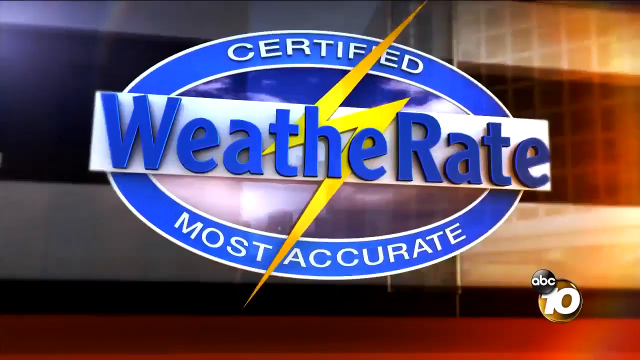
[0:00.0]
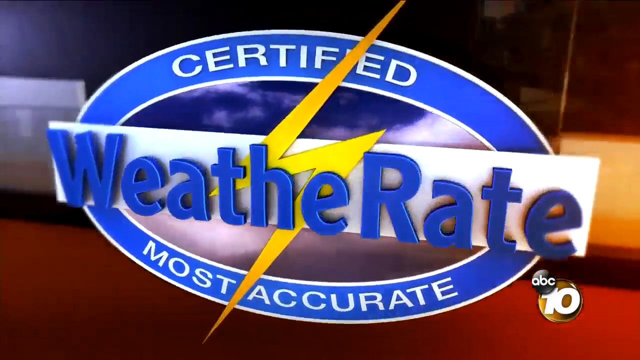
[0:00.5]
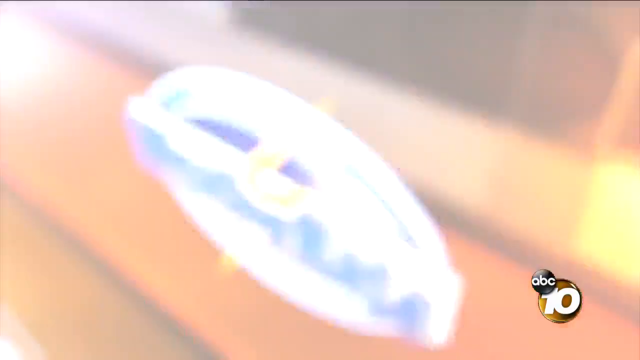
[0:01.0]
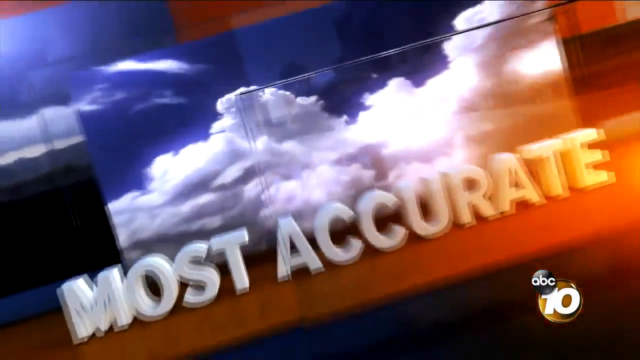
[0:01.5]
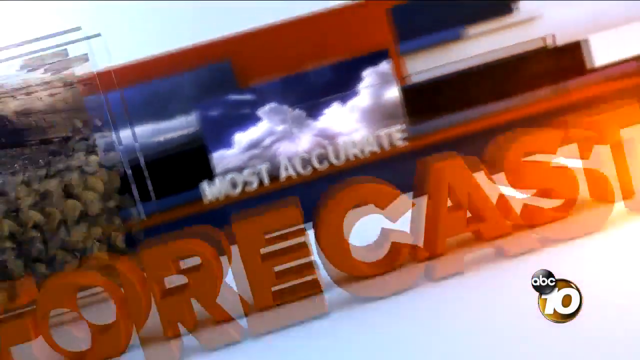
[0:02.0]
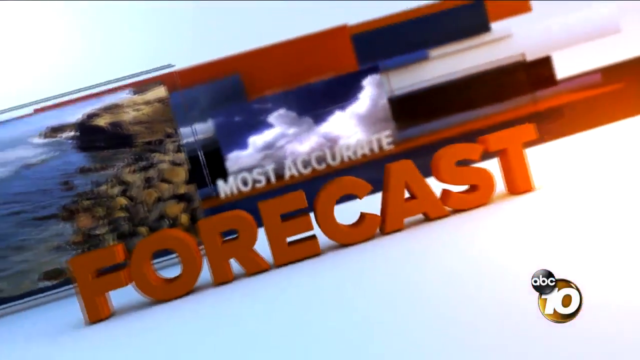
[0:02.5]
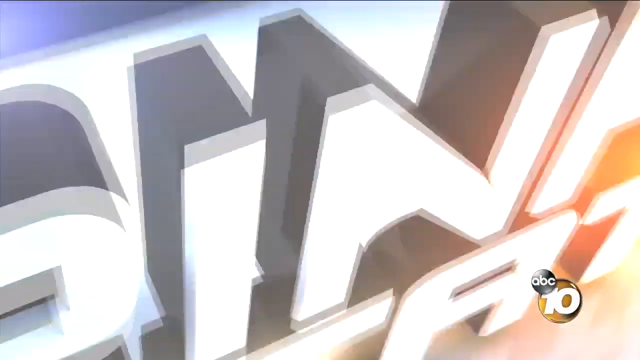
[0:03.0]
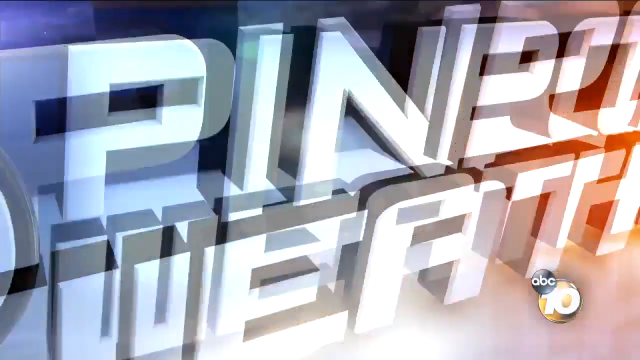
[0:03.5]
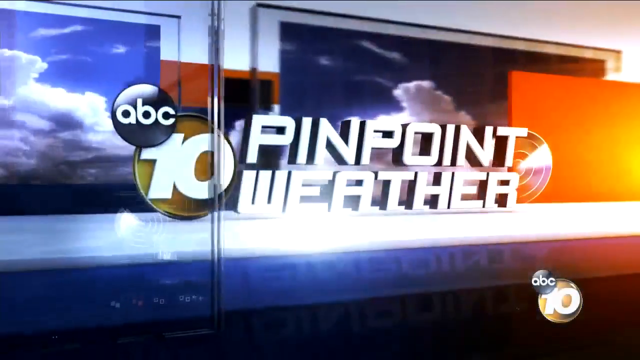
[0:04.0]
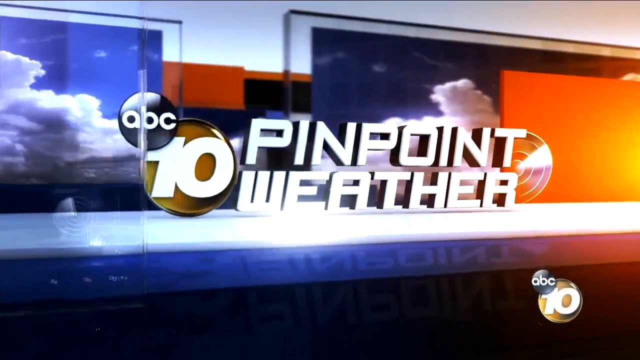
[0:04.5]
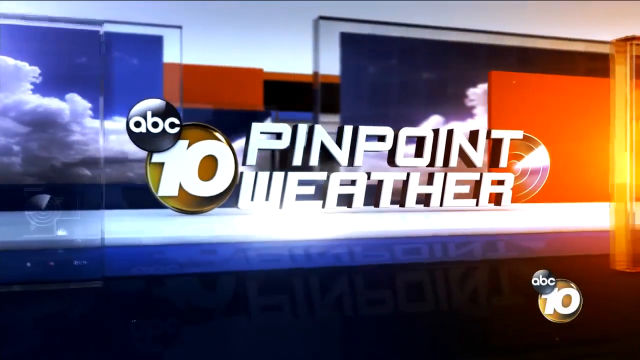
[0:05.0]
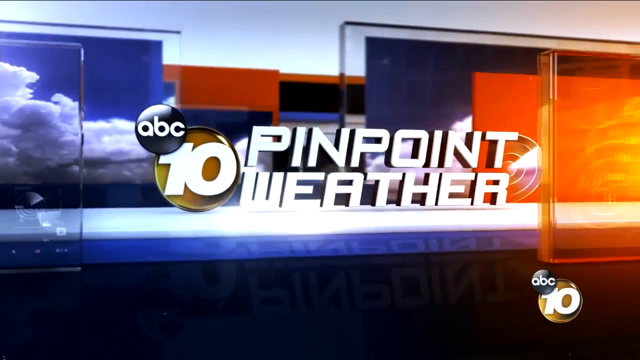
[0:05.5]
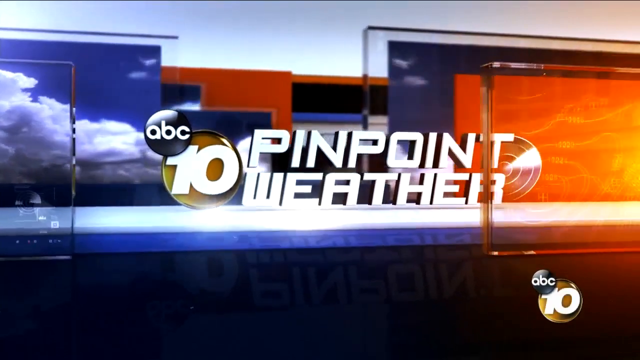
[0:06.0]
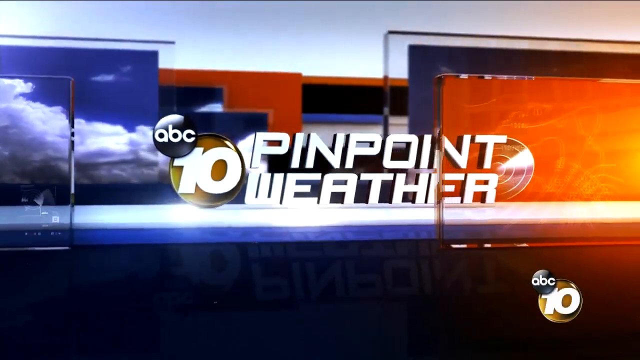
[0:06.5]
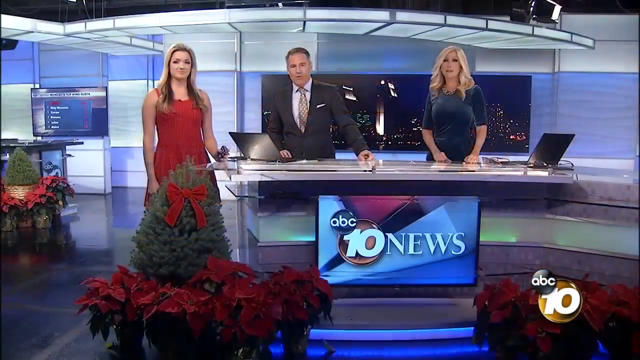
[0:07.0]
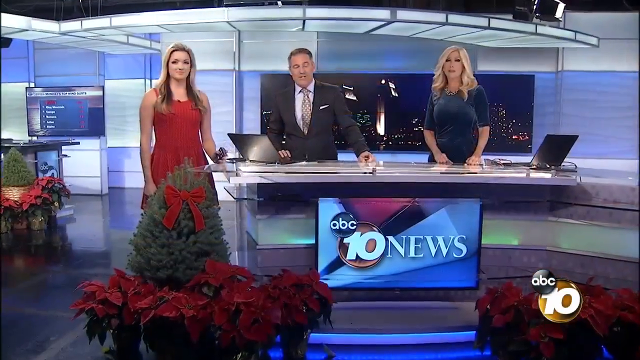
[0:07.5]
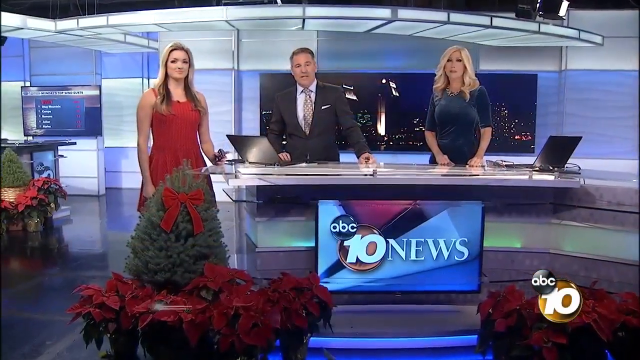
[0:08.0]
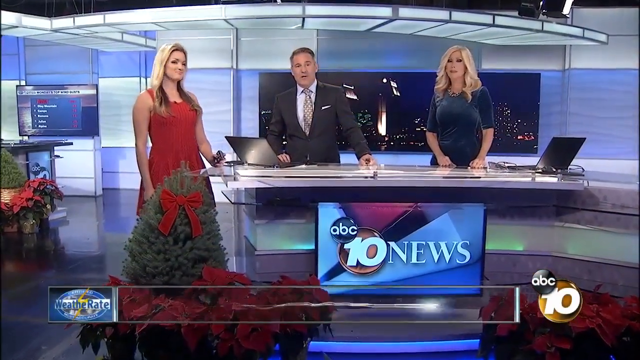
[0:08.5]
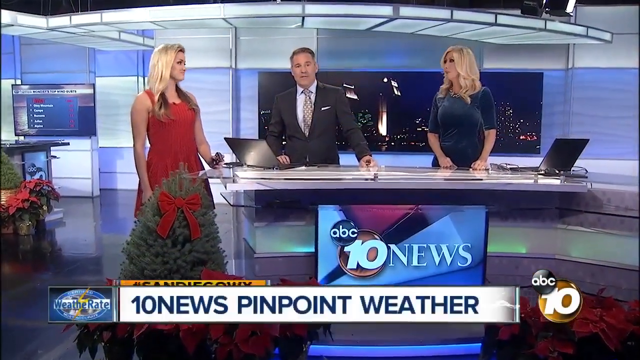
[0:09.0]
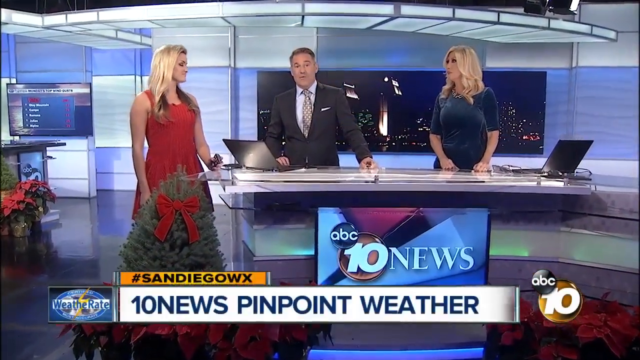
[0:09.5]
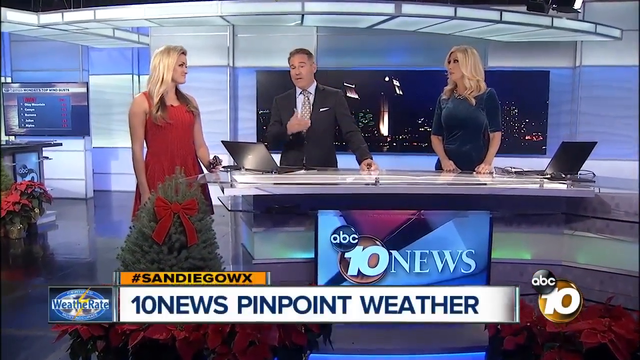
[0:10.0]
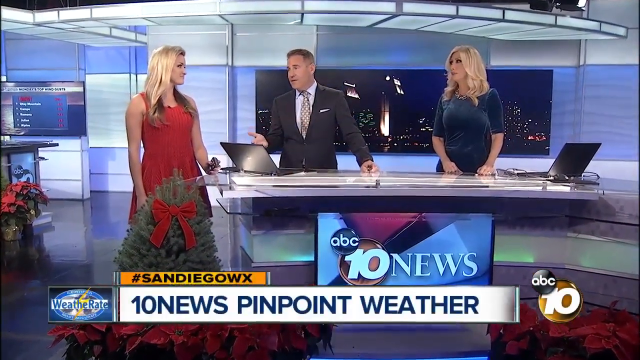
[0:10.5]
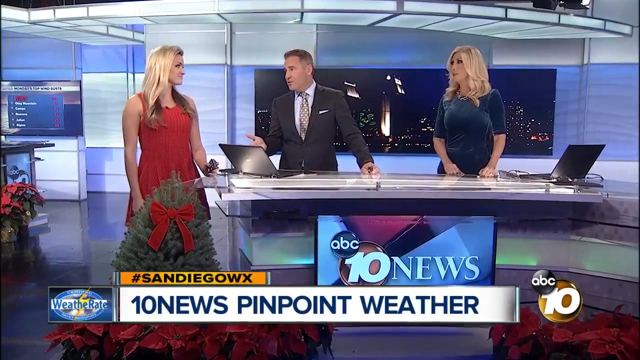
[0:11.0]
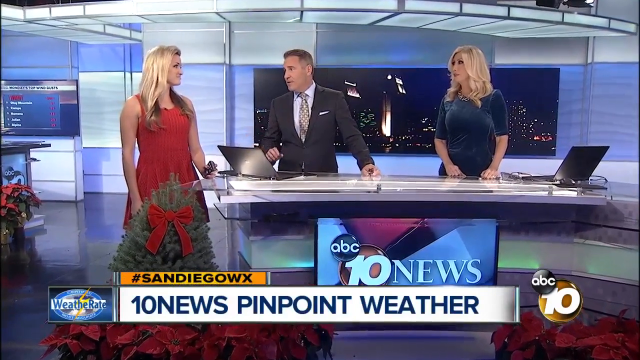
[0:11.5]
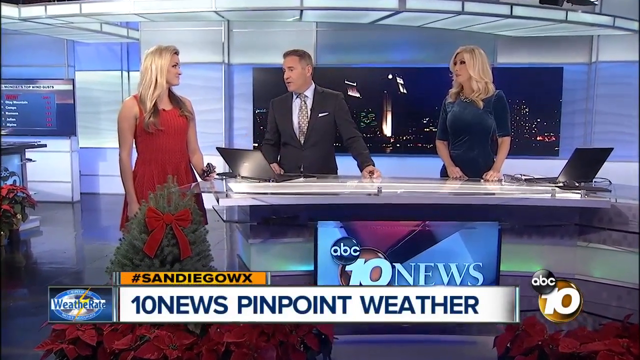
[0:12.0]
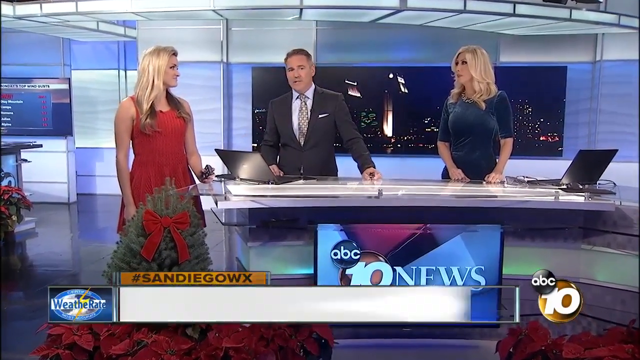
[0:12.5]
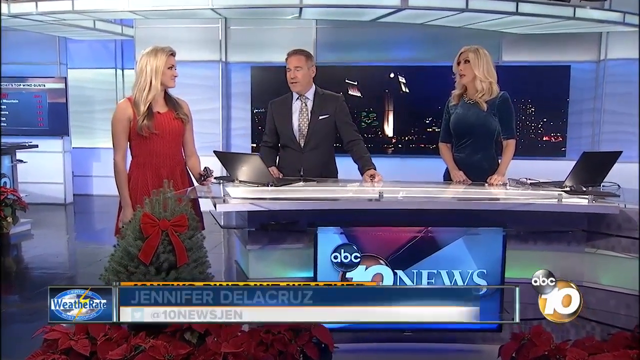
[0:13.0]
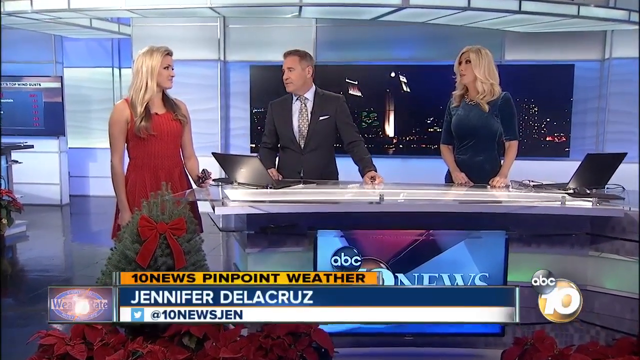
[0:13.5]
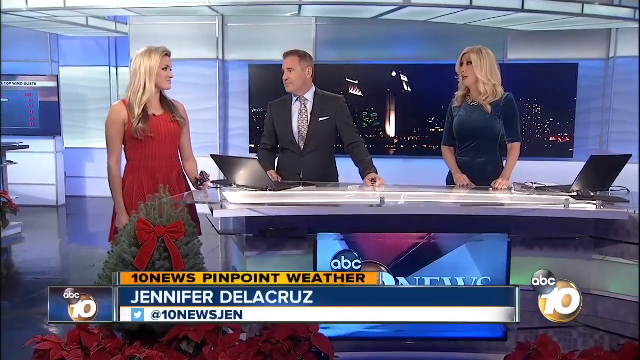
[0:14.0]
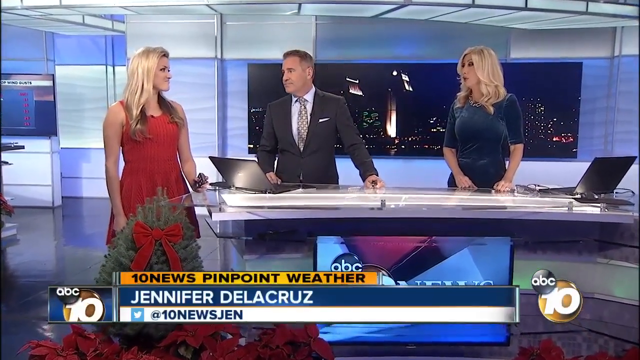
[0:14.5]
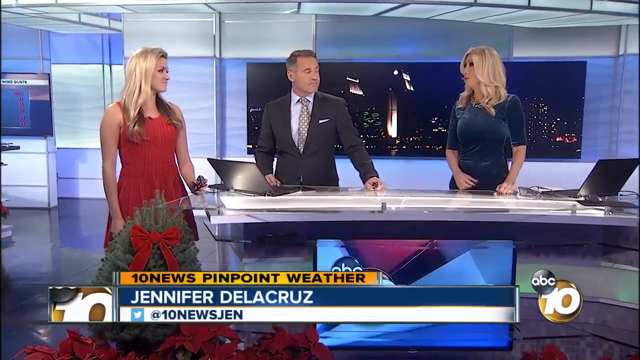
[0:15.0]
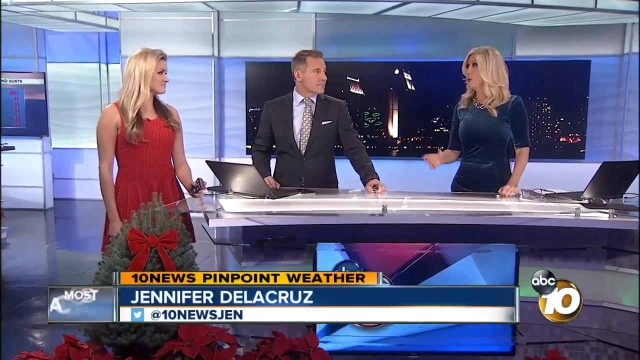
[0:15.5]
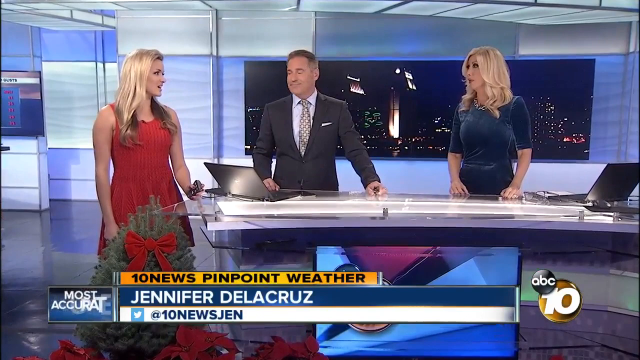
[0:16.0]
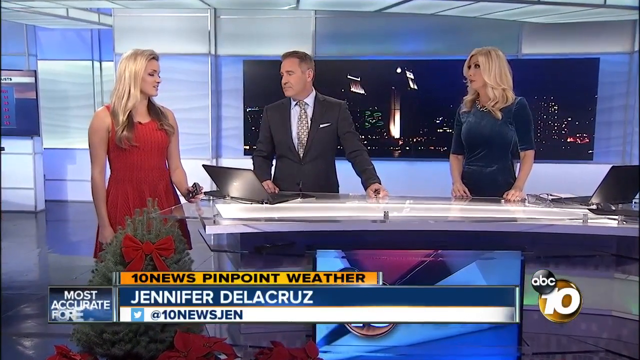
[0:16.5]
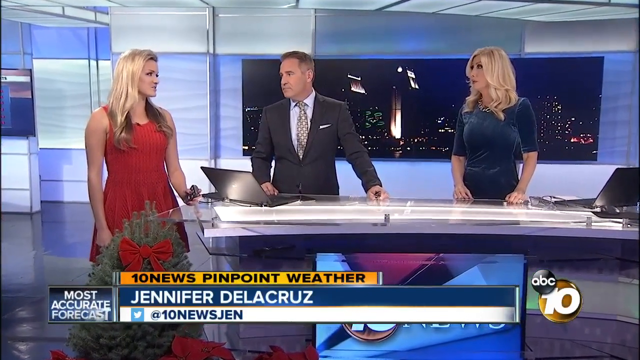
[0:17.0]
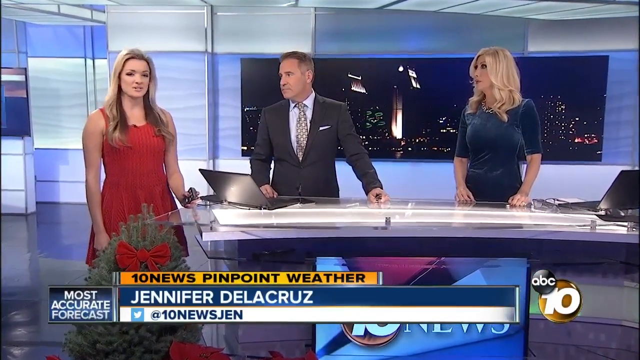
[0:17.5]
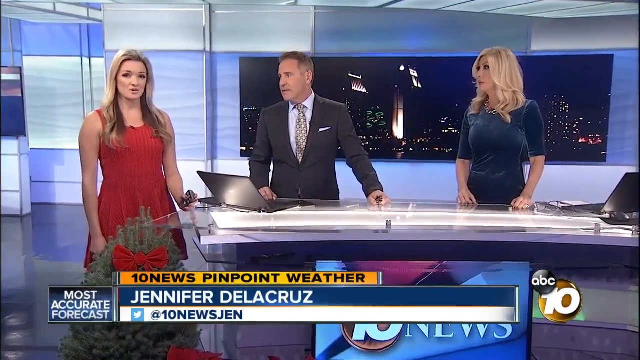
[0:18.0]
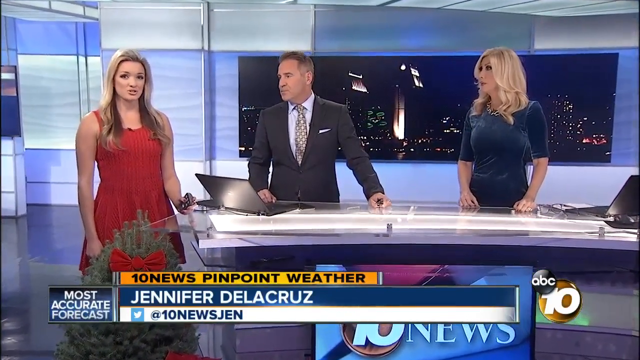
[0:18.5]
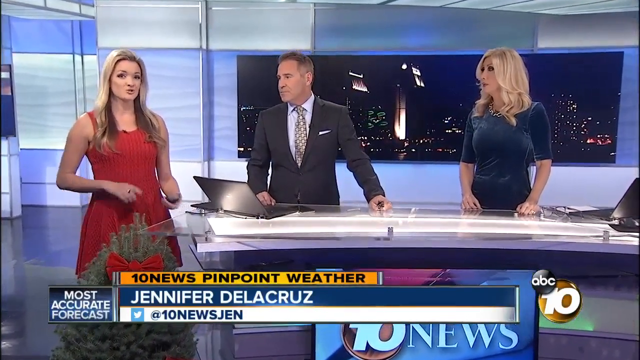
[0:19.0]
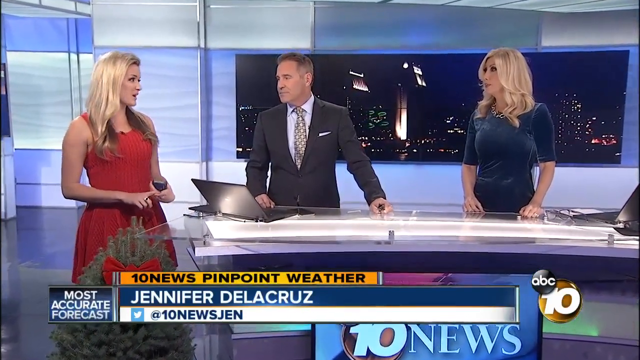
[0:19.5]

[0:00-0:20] The video opens with on-screen text reading "certified weather report", "most accurate forecast" and "pinpoint weather" from ABC. Three people are in a newsroom, apparently explaining the weather forecast, and the name "Jennifer Dela Cruz" is written on screen. A sign shows "certified" and "most accurate", introducing the forecast.